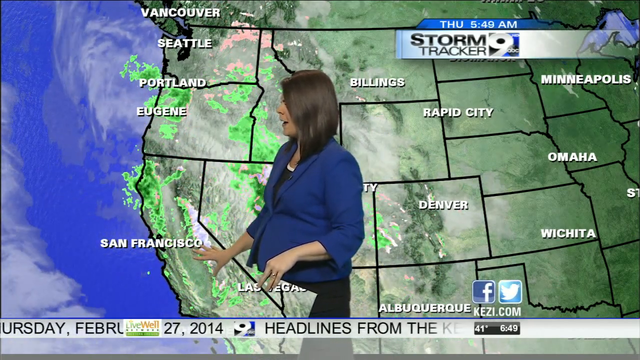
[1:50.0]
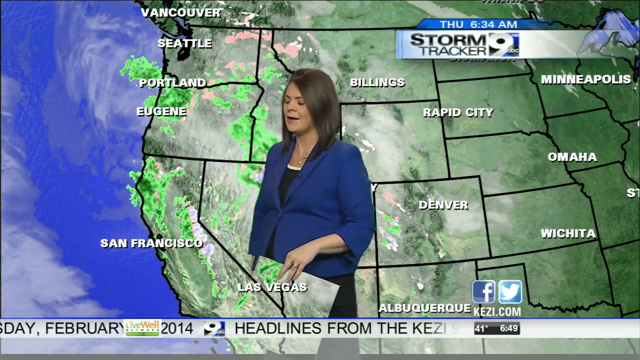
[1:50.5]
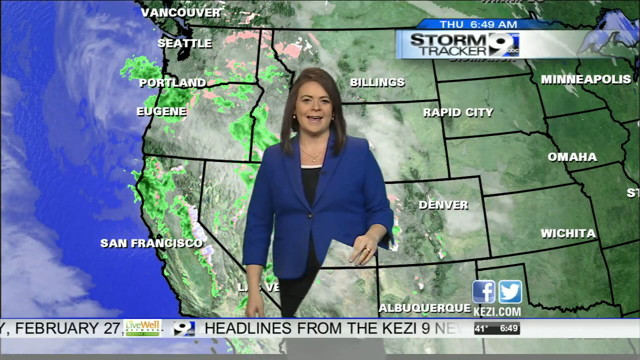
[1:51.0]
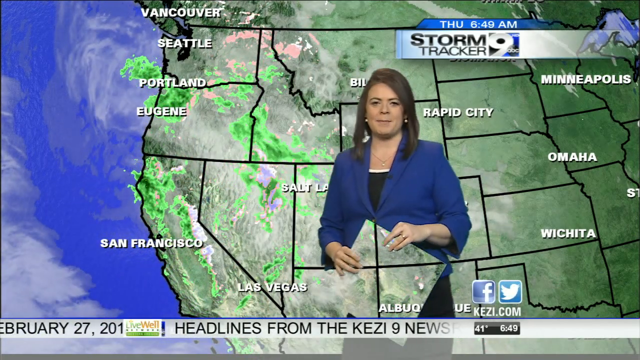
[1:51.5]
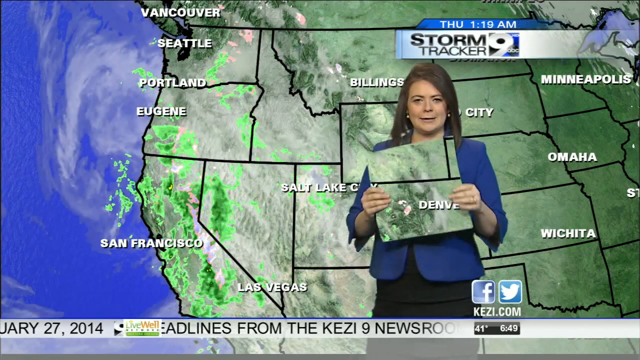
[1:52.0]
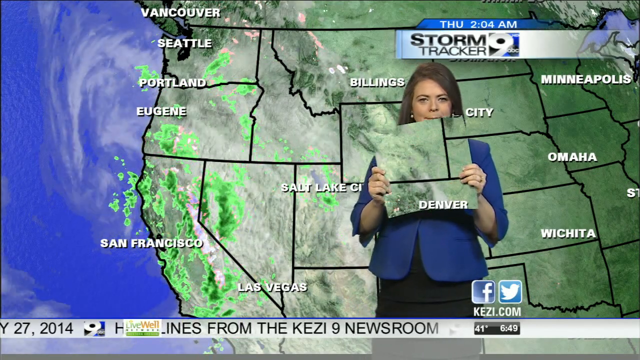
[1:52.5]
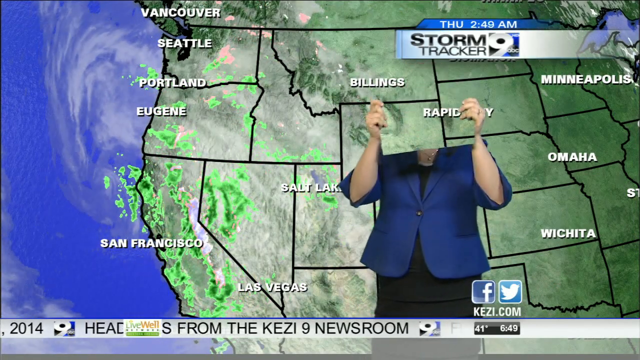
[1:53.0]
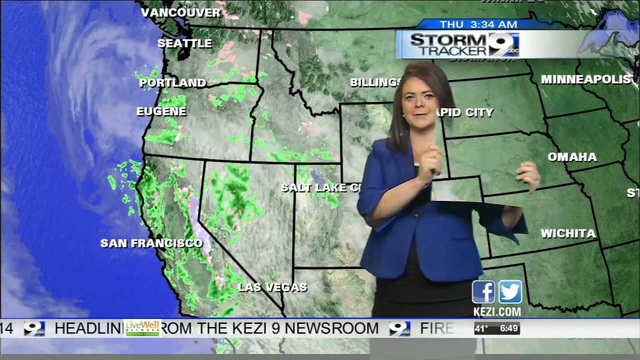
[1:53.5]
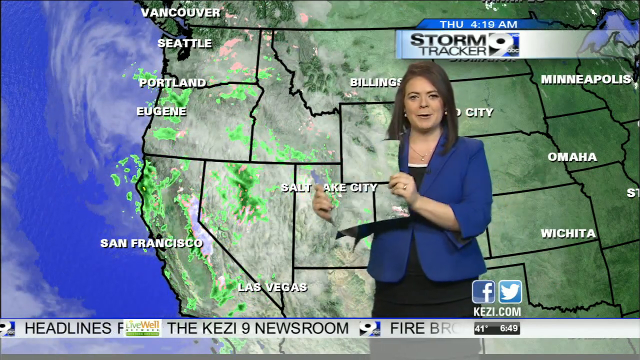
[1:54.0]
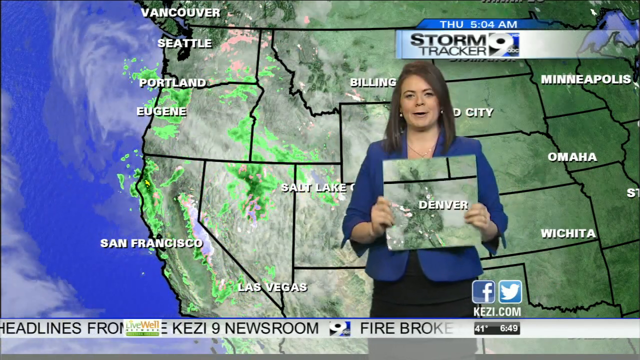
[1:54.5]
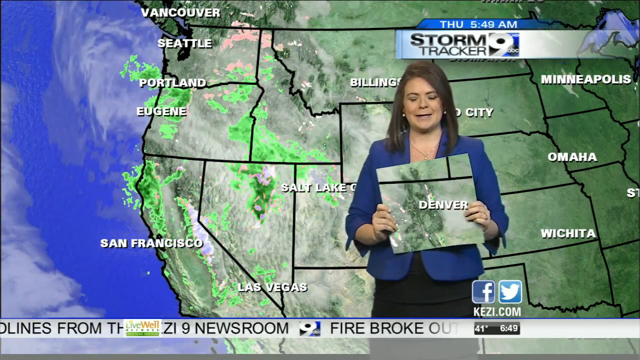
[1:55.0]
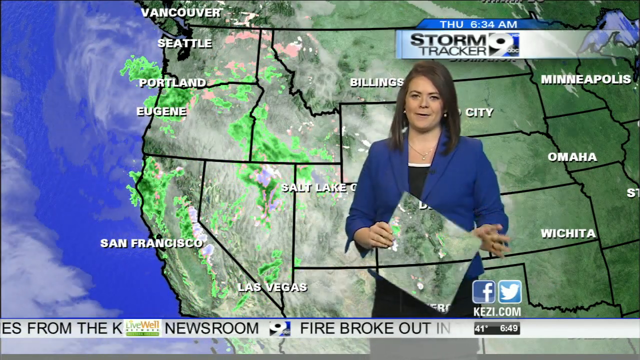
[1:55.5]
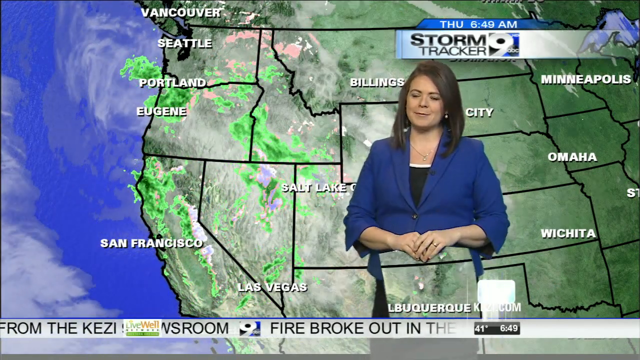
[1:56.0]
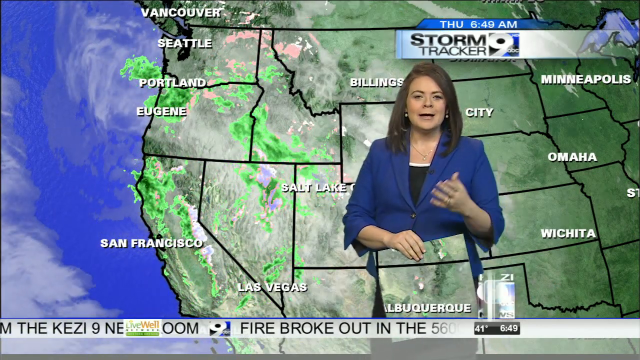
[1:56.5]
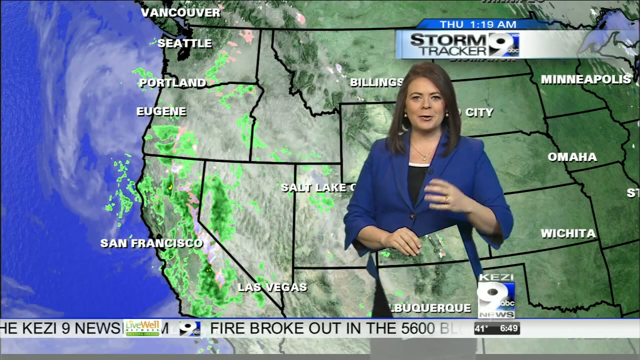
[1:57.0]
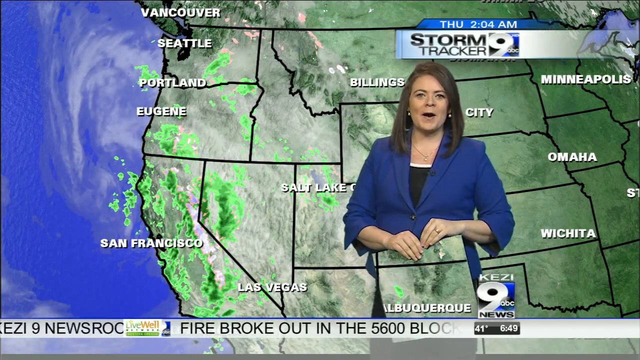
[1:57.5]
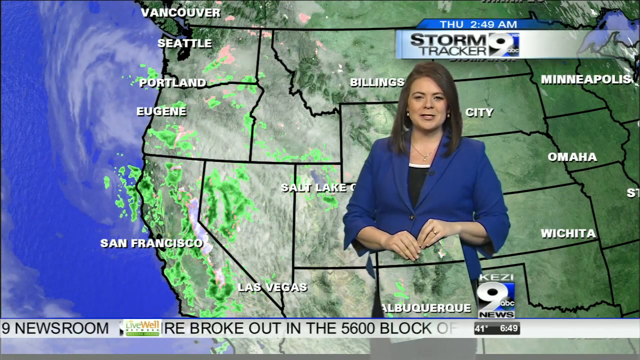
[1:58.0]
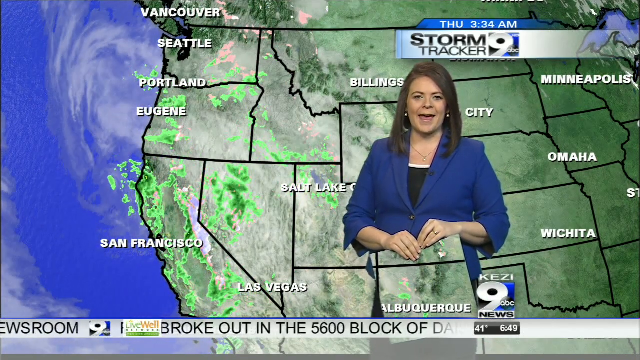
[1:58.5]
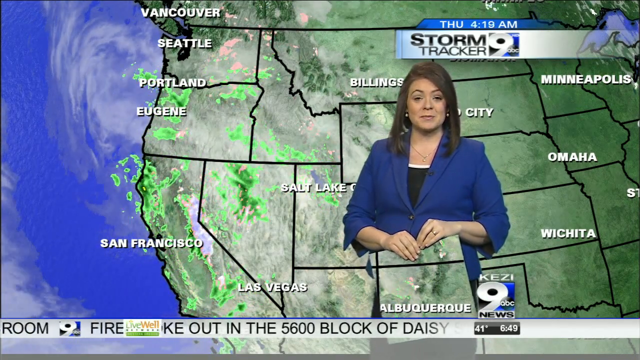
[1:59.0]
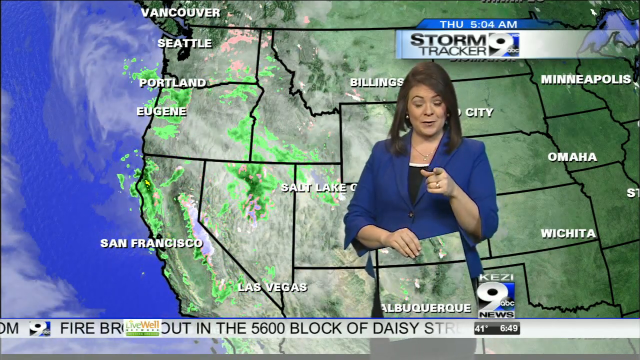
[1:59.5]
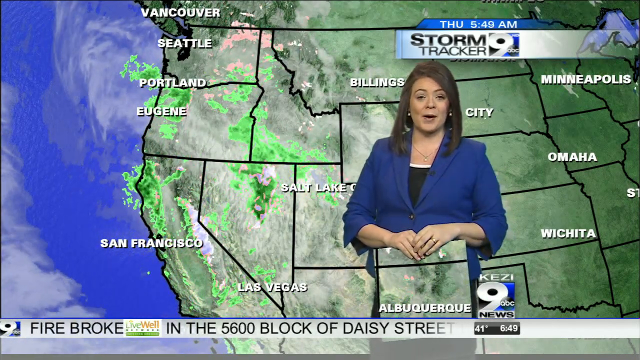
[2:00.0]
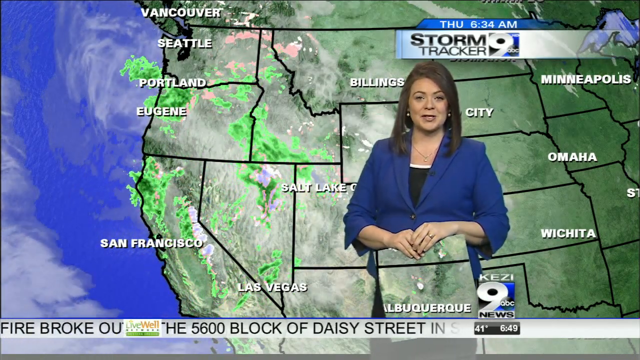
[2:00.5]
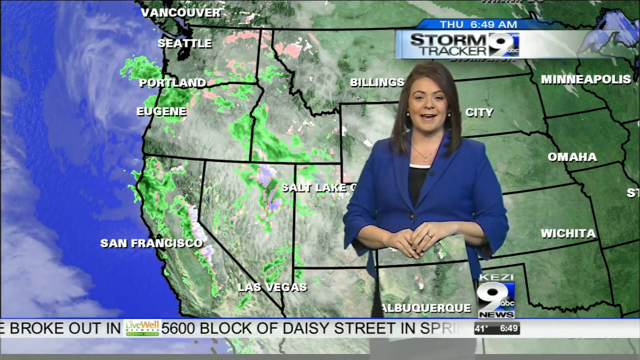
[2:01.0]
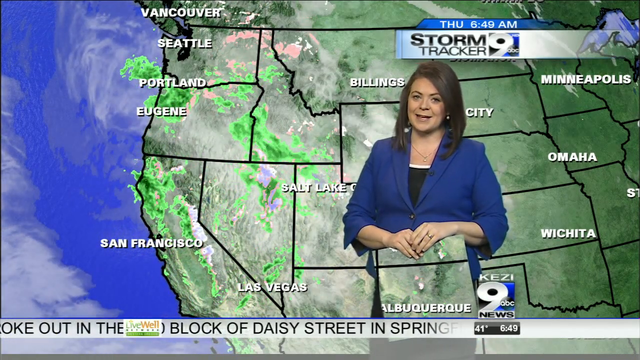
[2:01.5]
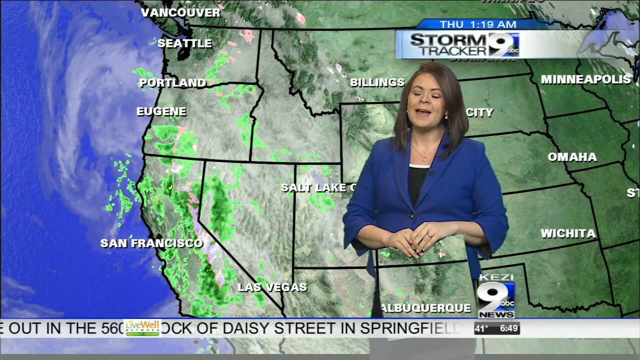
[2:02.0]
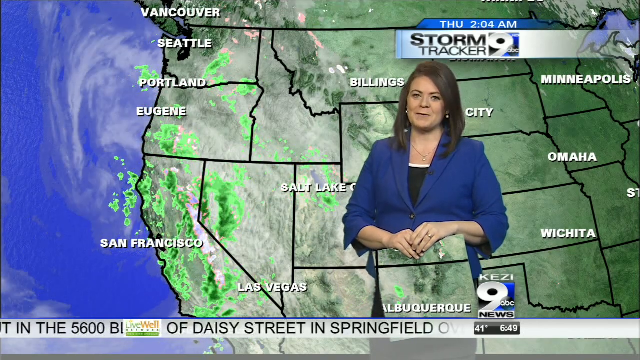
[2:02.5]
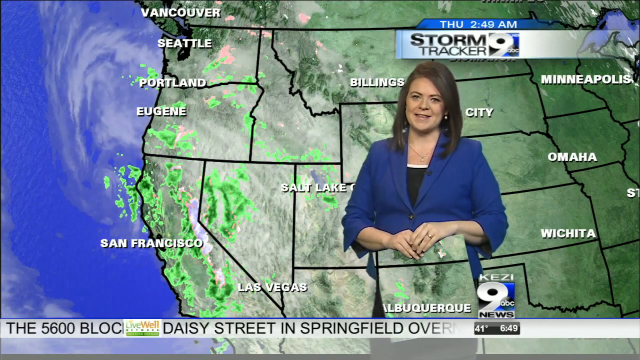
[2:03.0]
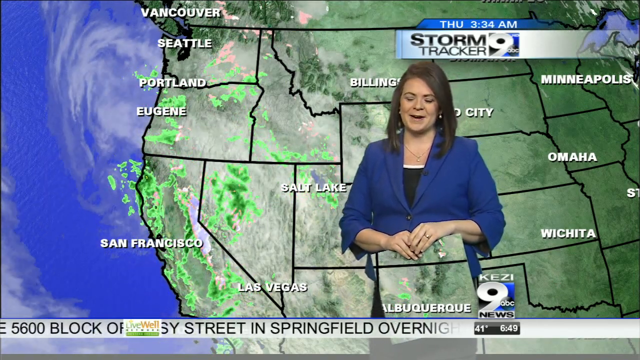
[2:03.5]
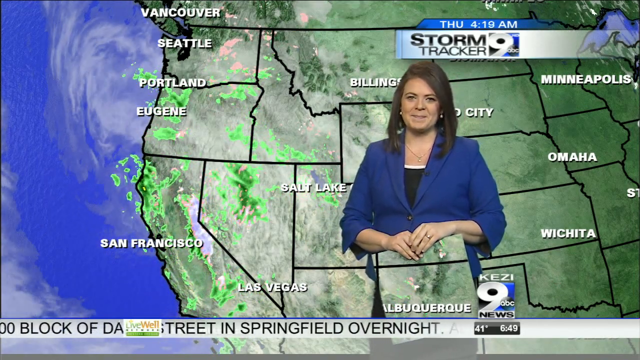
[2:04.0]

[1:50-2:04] A weather segment airs on a news station, clearly labeled "9ABC News" in the bottom right and upper right of the screen. A ticker with the day's headlines runs across the bottom while the meteorologist stands in front of a green screen weather map, talking toward the camera. In a bit of silliness, she holds a piece of what is apparently green paper that picks up the green screen image. When she holds it in front of her, it blocks out that part of her; she holds it up in front of her face to block out her head, then moves it from side to side, showing that the map goes wherever she holds the sheet. The map behind her has black lines outlining the state borders and bold white text marking key cities, including Las Vegas, San Francisco, Salt Lake City, Wichita and Omaha. Most of the map is focused on the west coast of the country, probably where this news affiliate is located.